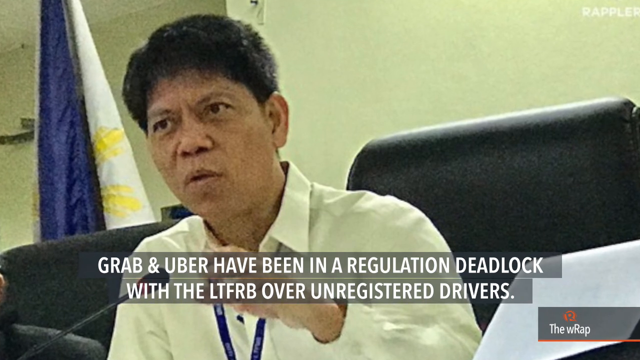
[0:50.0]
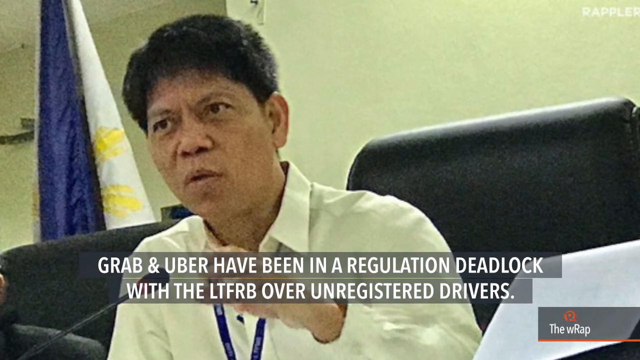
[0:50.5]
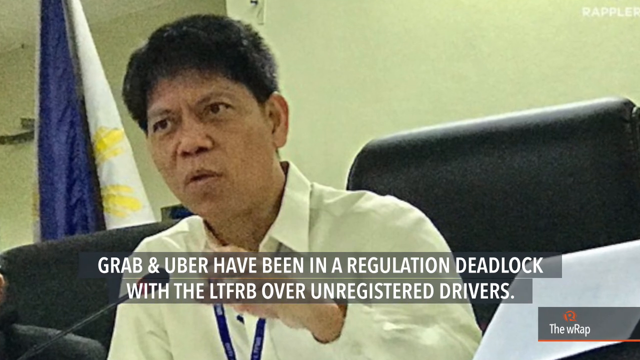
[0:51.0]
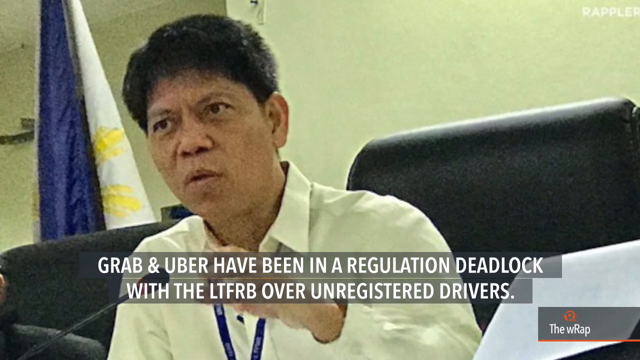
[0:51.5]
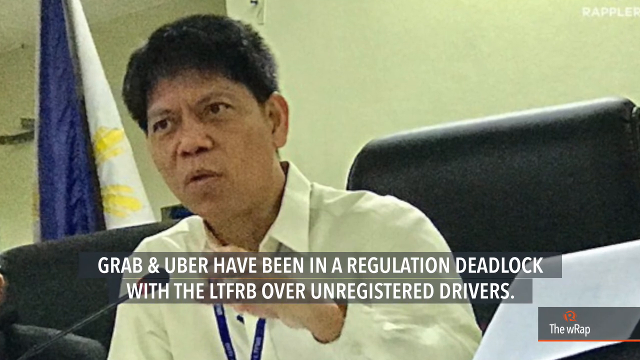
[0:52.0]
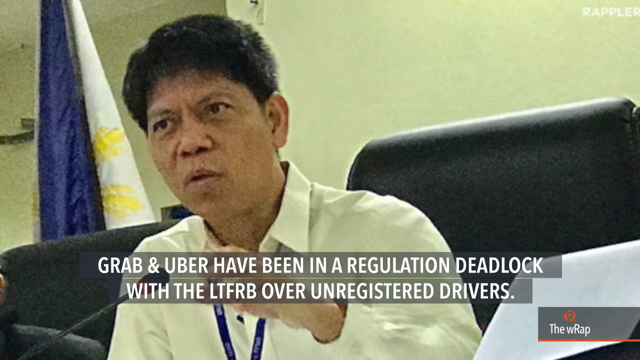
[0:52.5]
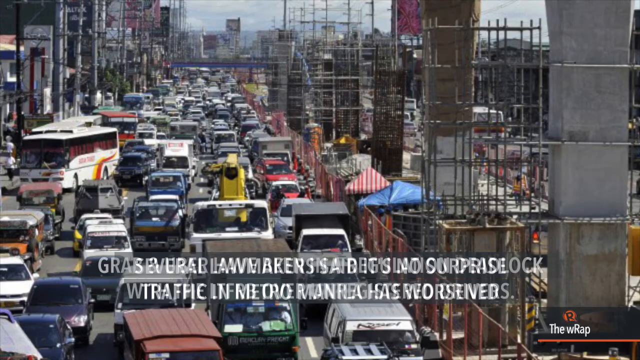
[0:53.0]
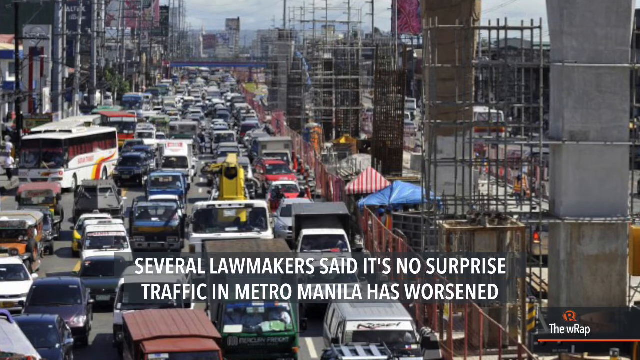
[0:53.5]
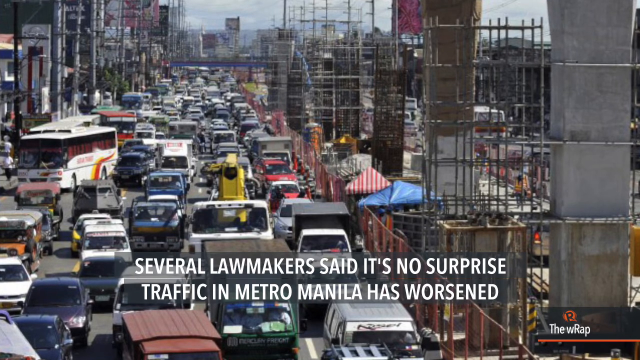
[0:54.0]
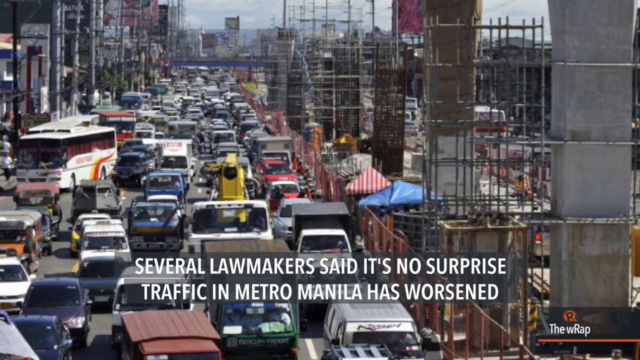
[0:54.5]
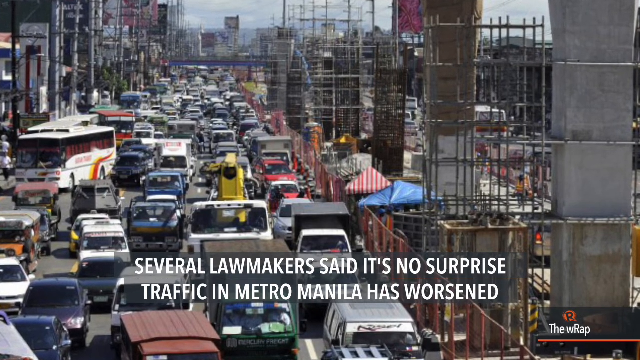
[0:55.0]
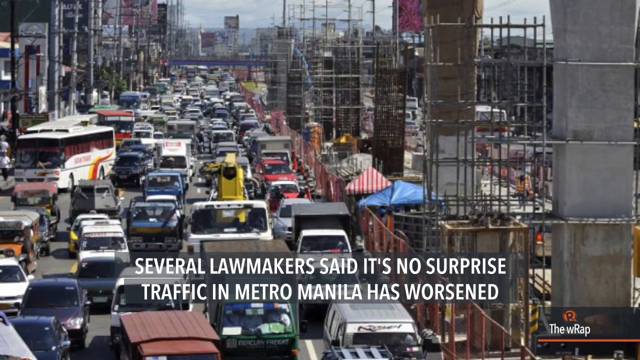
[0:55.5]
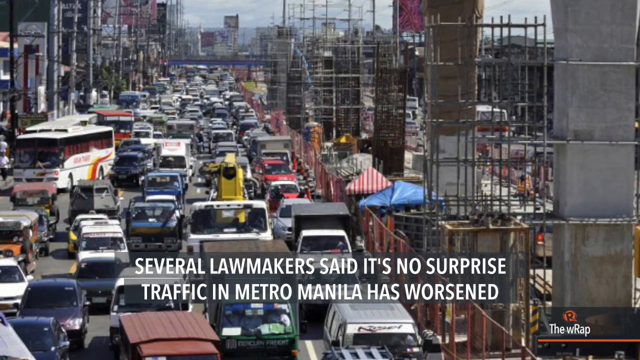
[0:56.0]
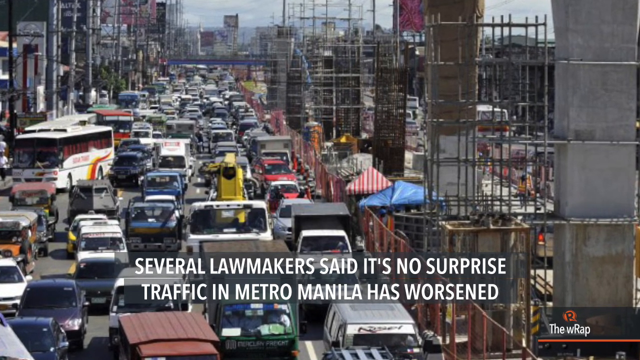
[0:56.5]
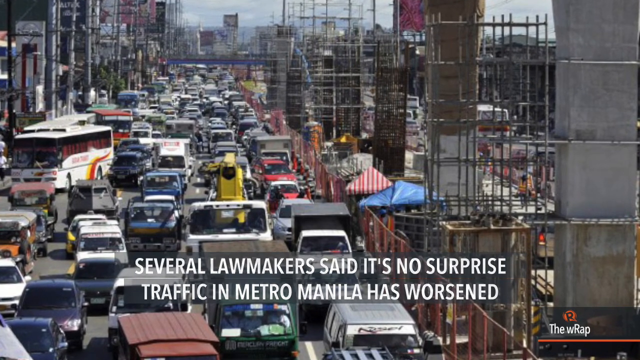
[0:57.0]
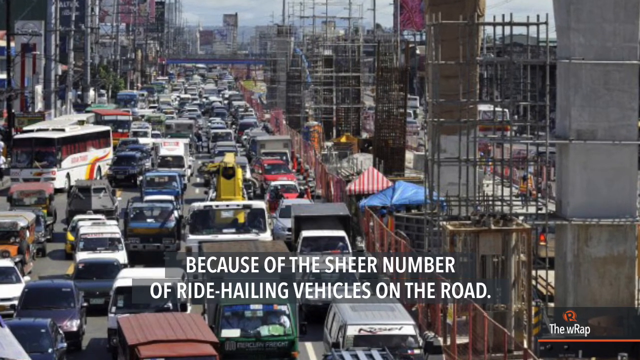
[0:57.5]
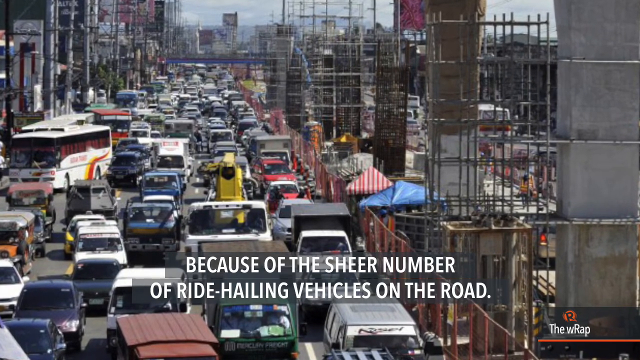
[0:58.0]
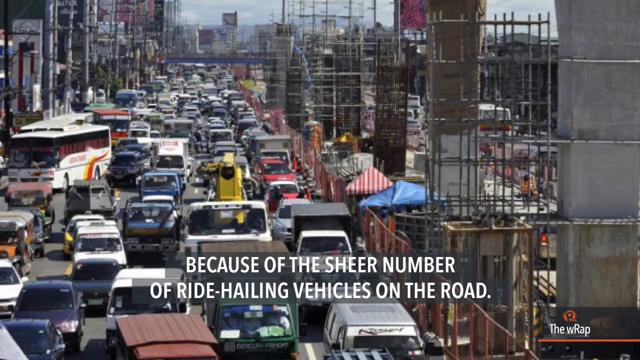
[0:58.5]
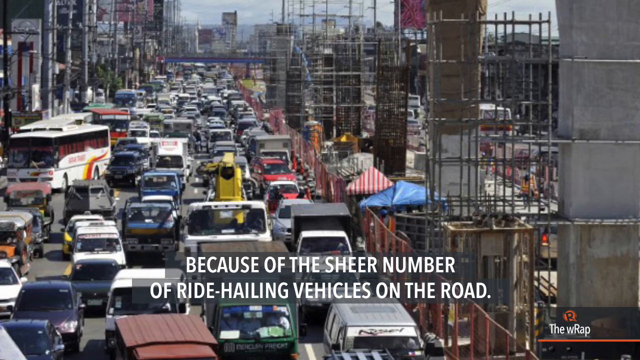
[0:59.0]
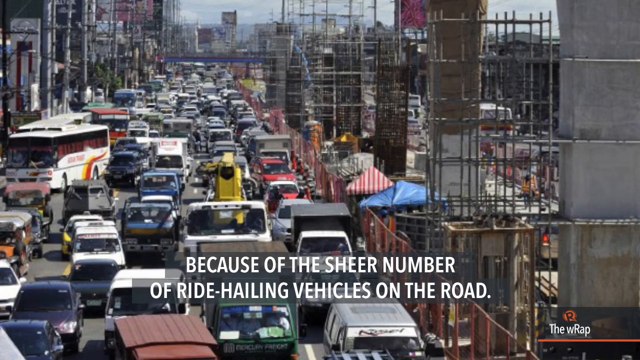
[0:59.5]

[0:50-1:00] The video deals with Grab and Uber drivers and traffic on the roads, with many vehicles moving on the road.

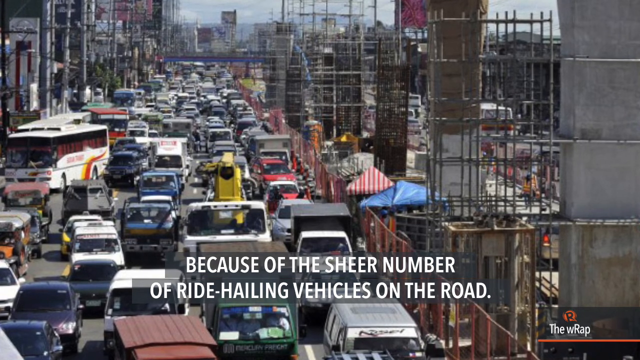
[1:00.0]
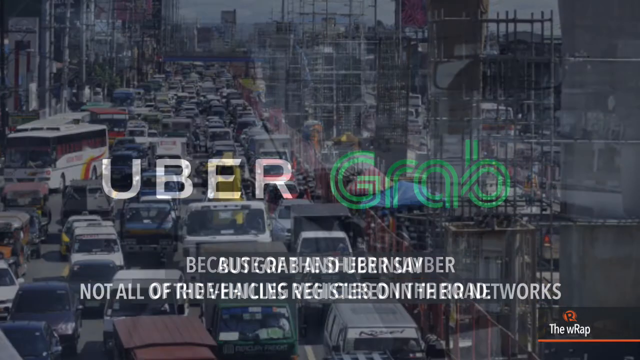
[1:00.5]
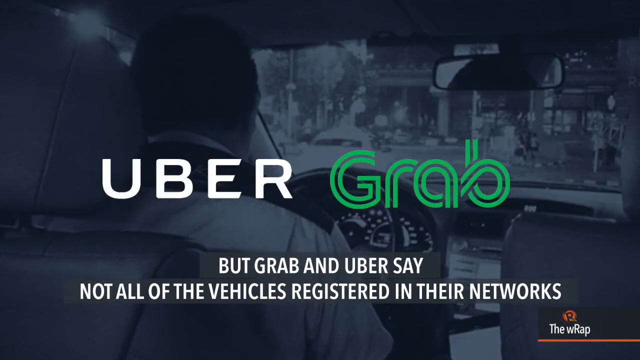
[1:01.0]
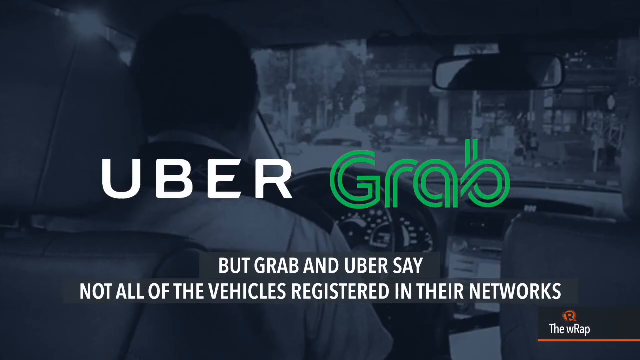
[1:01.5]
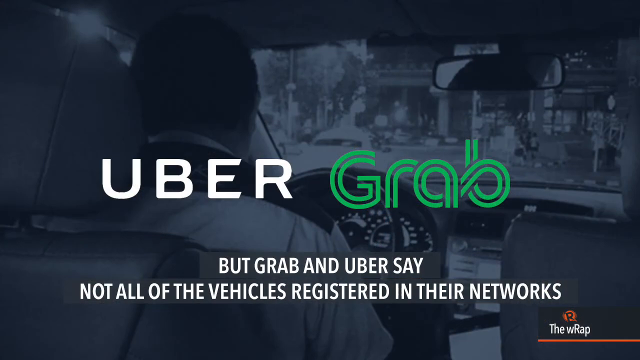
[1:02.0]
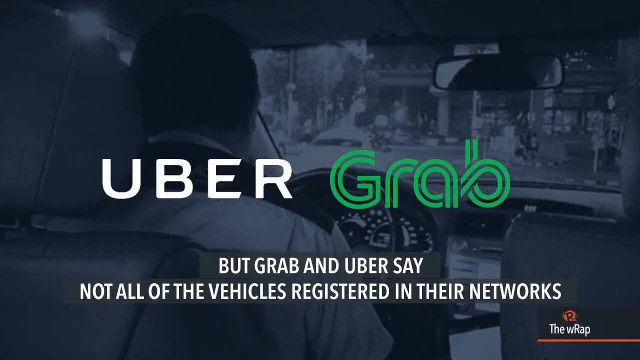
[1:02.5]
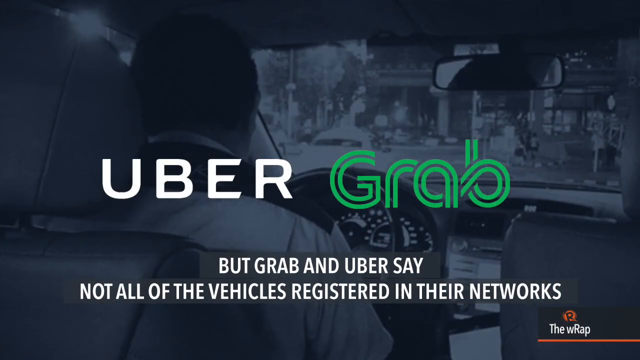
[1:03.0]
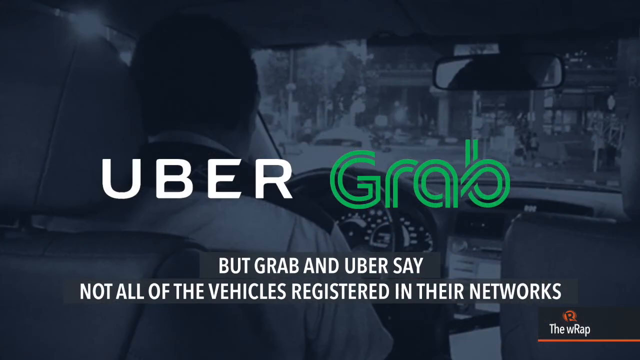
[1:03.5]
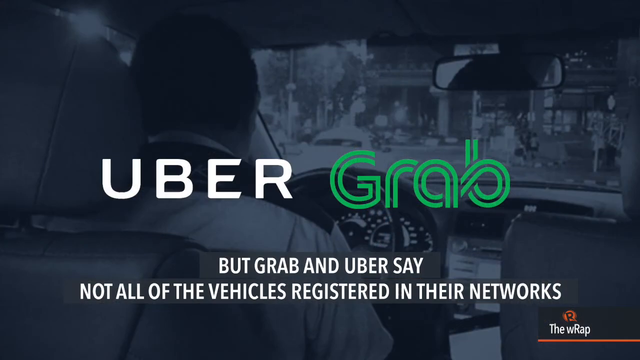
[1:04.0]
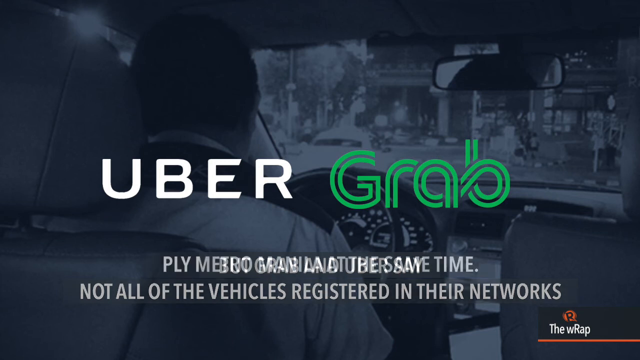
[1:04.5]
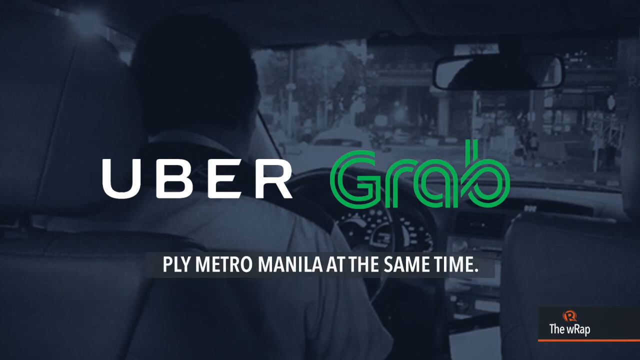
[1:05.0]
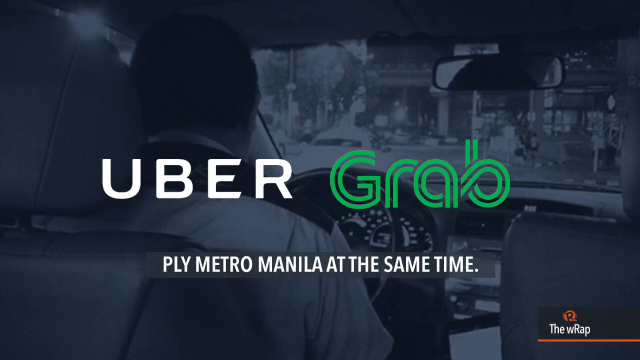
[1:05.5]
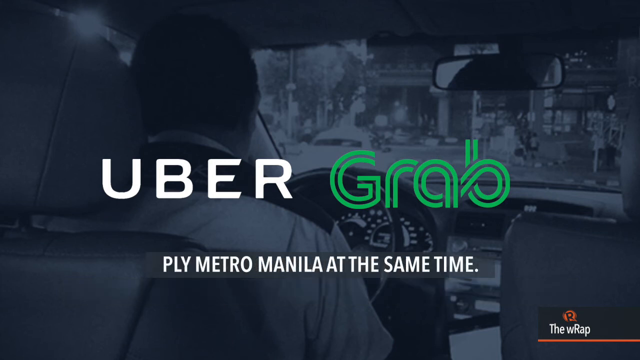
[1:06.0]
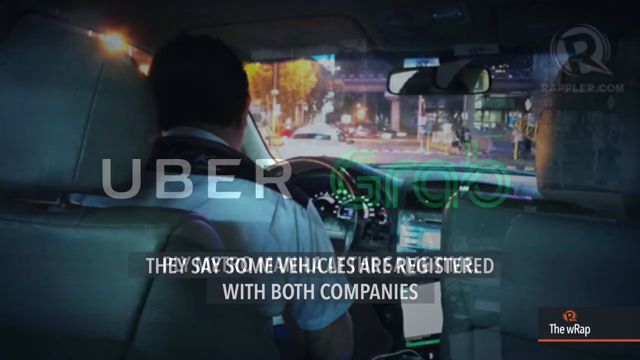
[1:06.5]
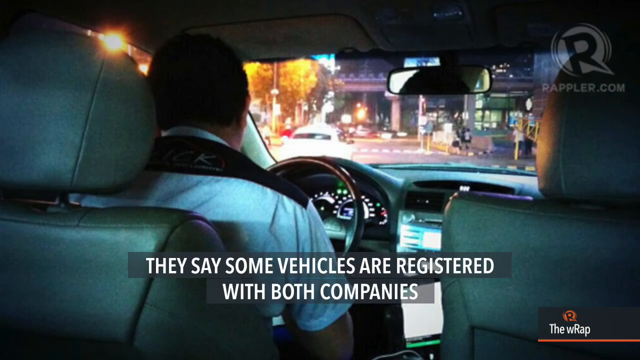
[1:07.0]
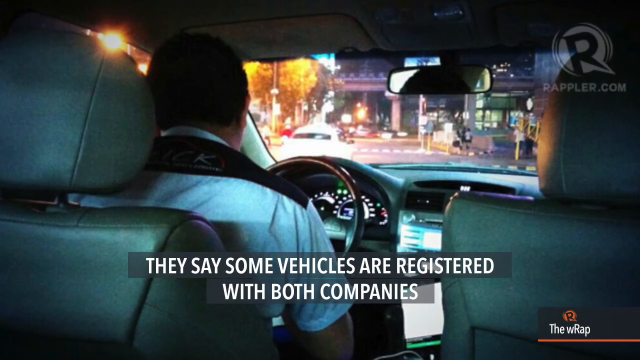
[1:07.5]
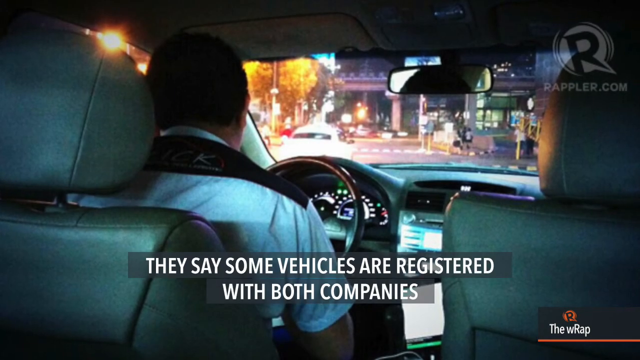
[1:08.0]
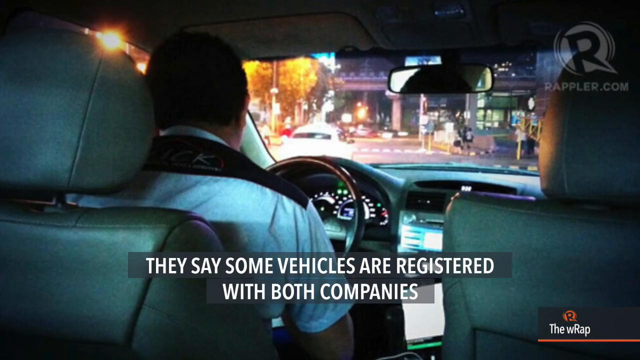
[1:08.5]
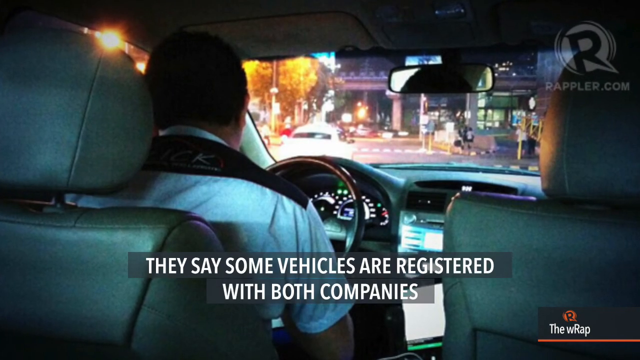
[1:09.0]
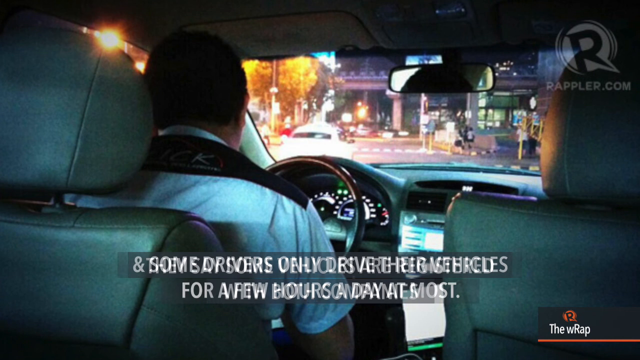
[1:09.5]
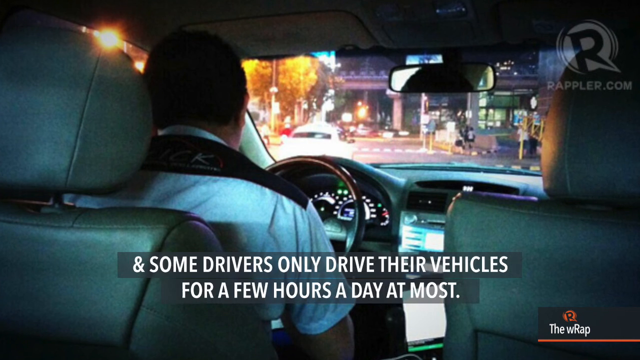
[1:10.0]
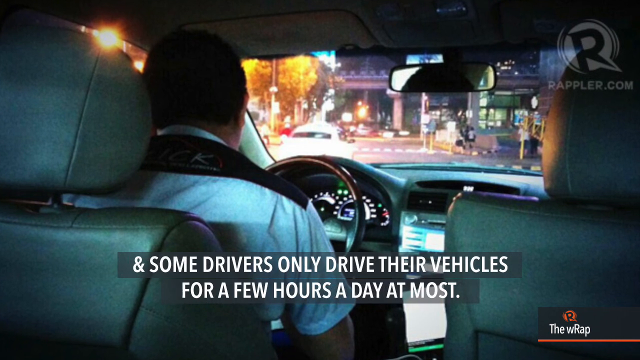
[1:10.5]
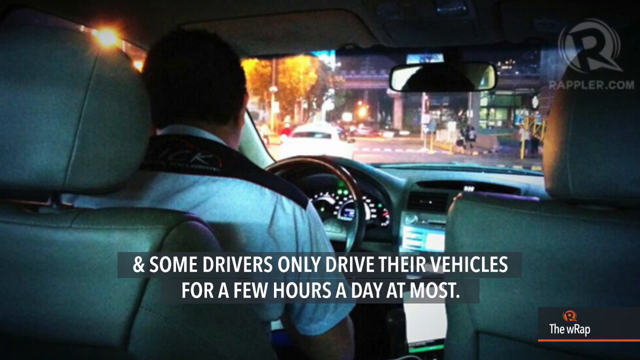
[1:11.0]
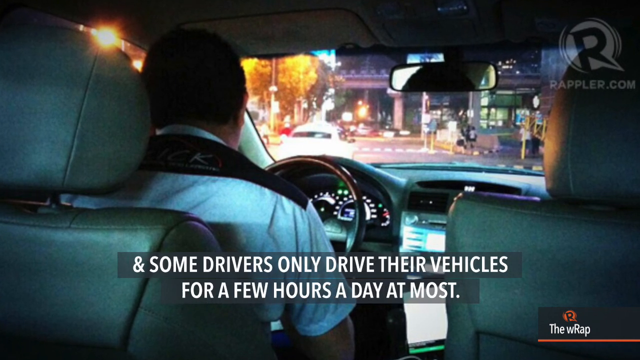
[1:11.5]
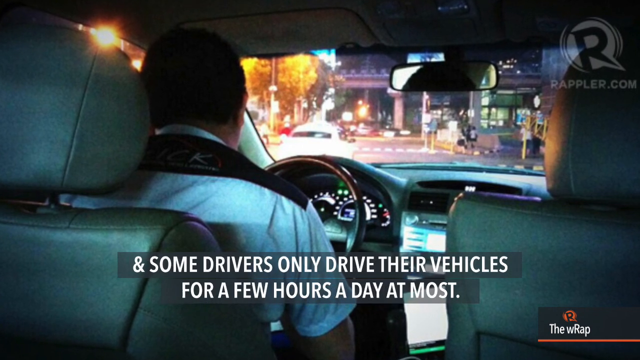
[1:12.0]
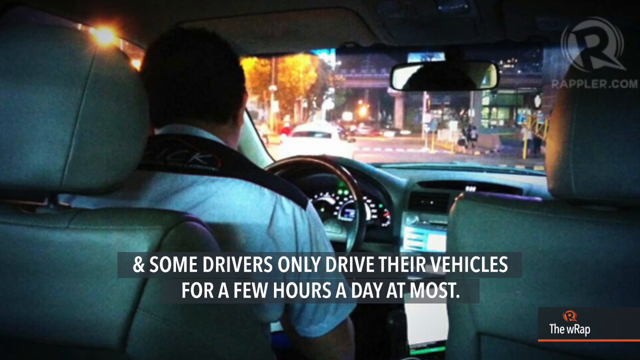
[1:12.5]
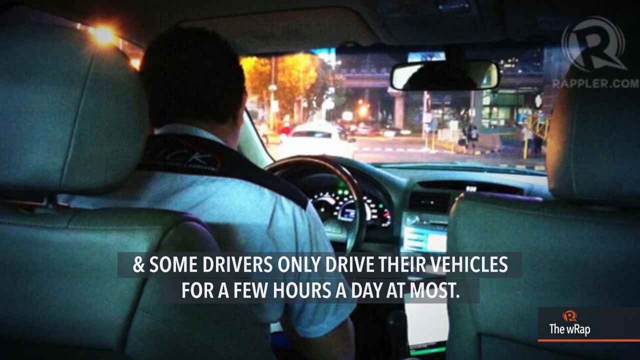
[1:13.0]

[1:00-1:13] Uber and Grab are shown, with reference to vehicles registered with both companies.